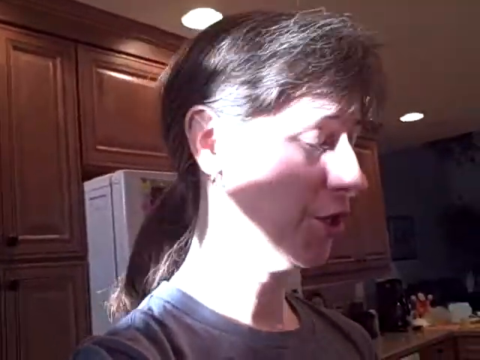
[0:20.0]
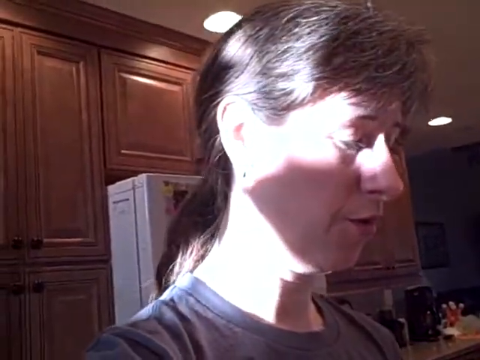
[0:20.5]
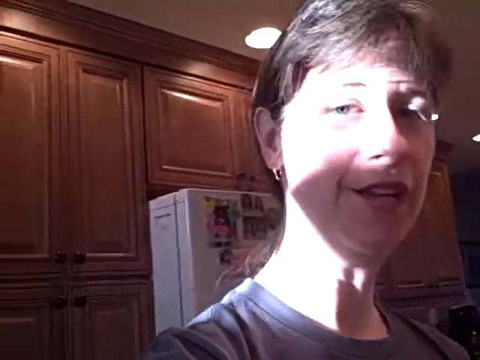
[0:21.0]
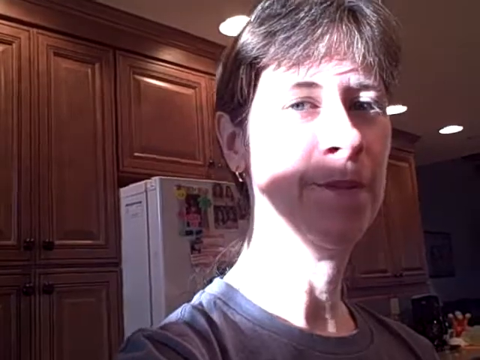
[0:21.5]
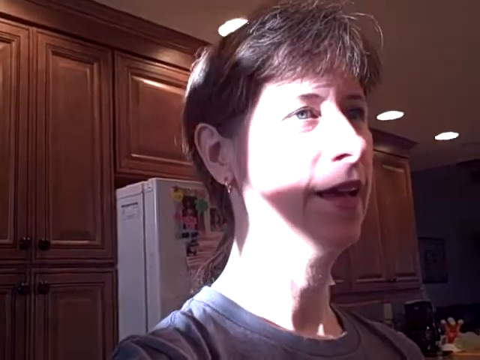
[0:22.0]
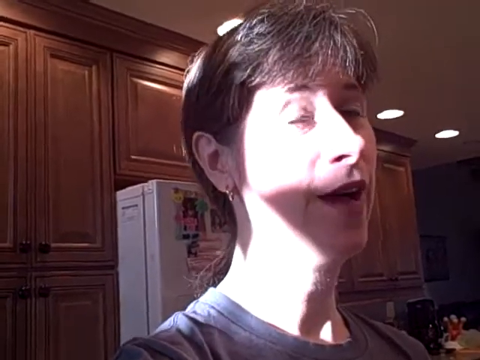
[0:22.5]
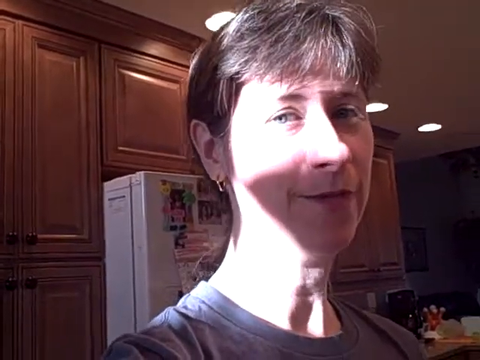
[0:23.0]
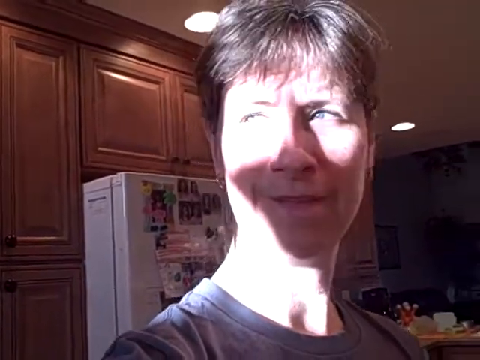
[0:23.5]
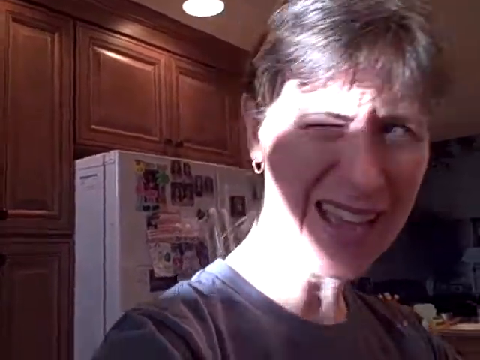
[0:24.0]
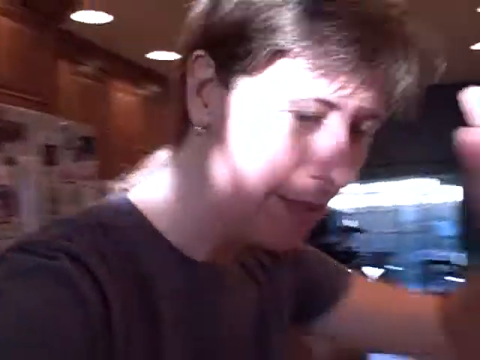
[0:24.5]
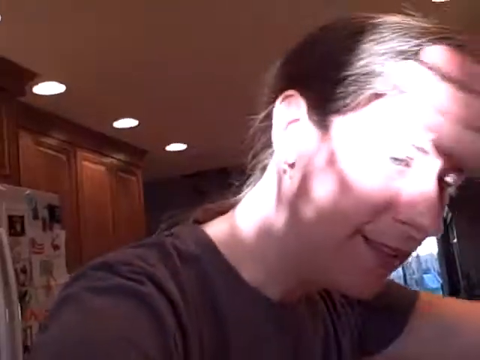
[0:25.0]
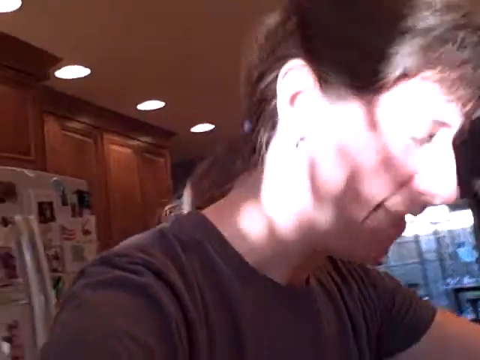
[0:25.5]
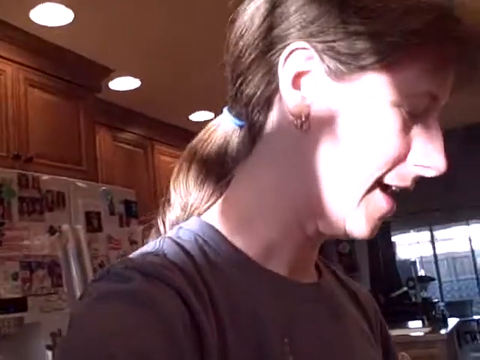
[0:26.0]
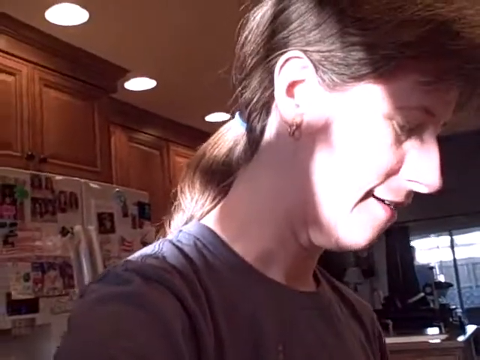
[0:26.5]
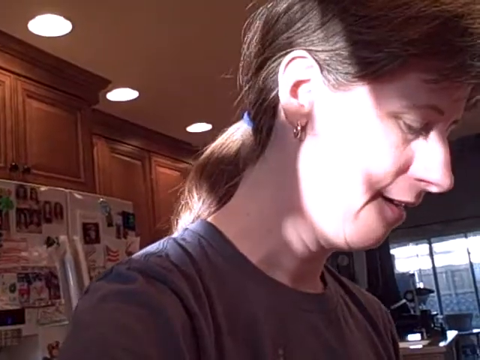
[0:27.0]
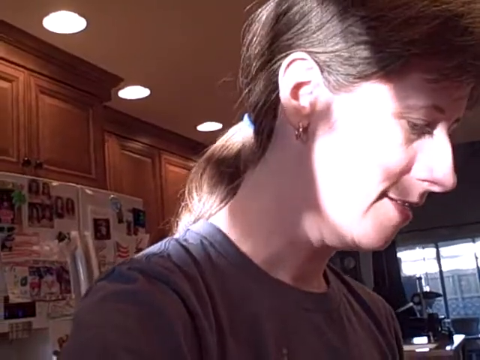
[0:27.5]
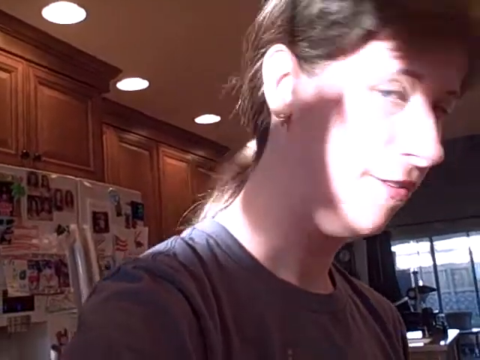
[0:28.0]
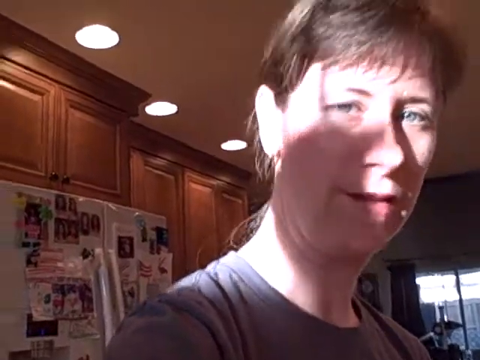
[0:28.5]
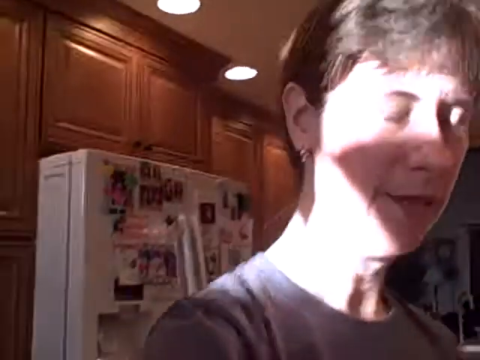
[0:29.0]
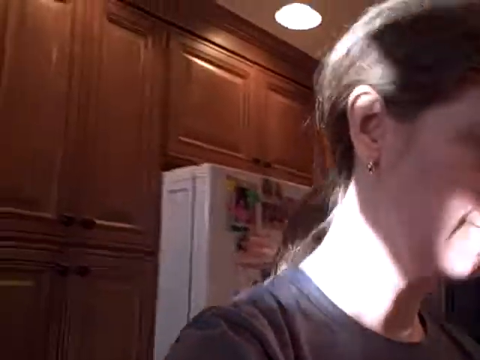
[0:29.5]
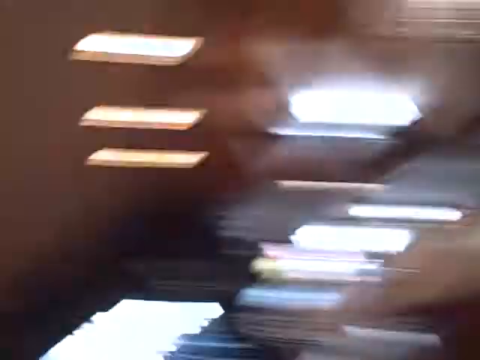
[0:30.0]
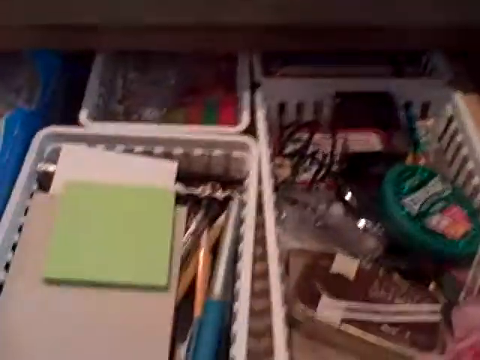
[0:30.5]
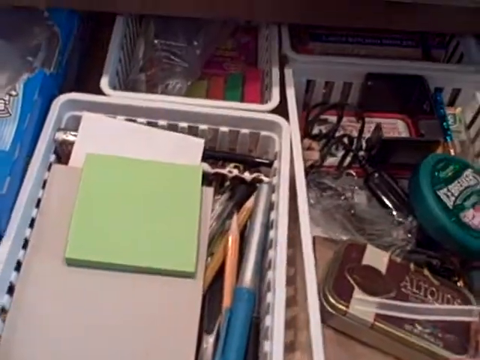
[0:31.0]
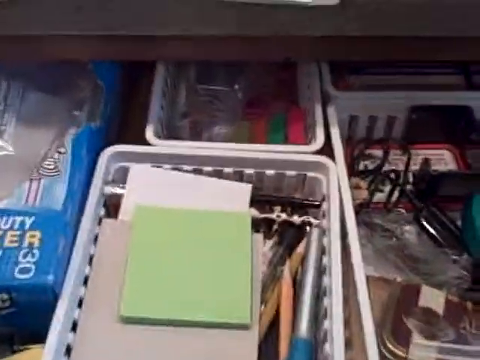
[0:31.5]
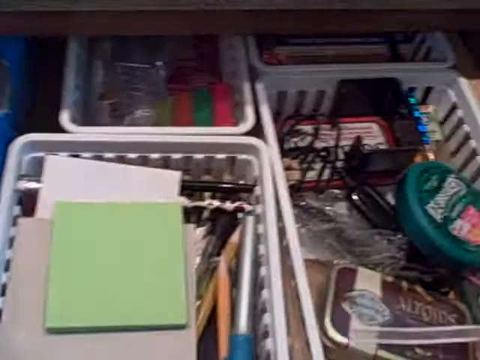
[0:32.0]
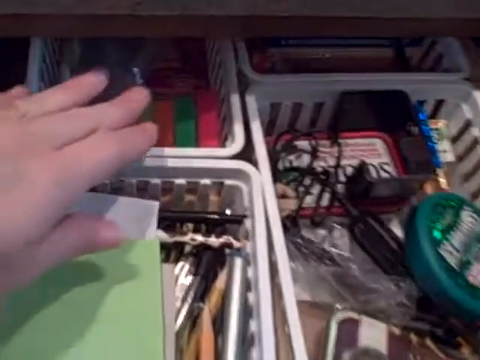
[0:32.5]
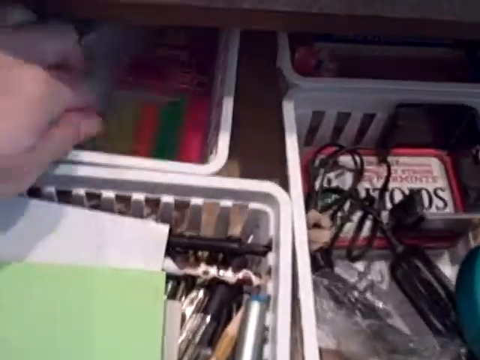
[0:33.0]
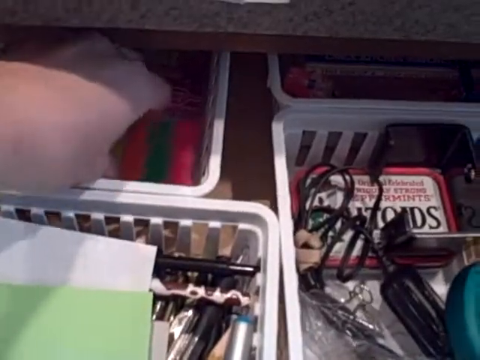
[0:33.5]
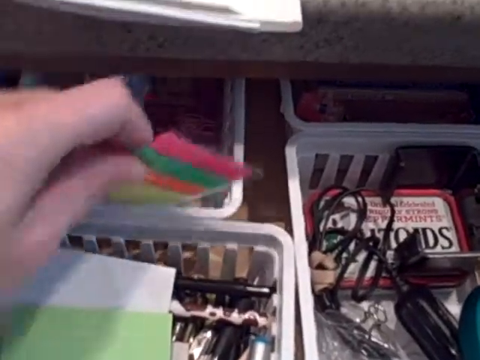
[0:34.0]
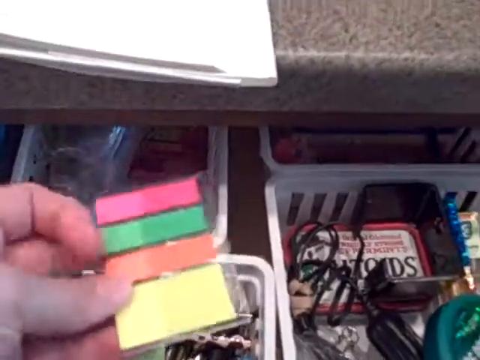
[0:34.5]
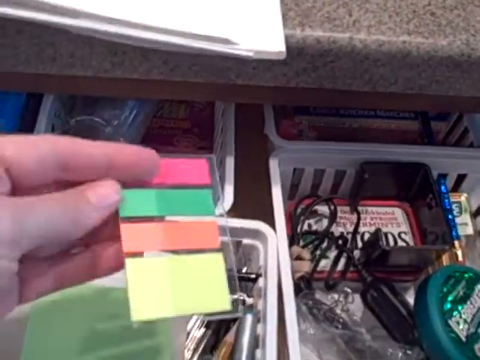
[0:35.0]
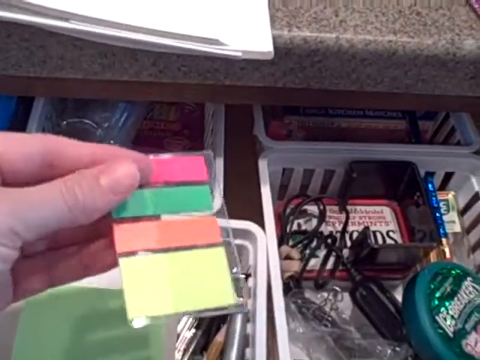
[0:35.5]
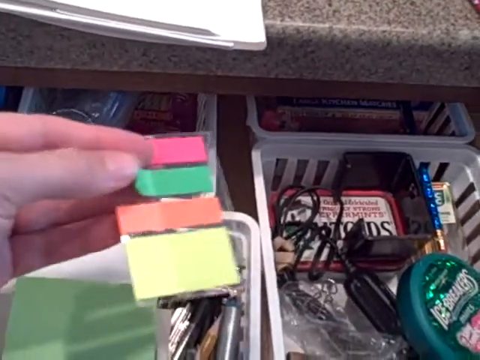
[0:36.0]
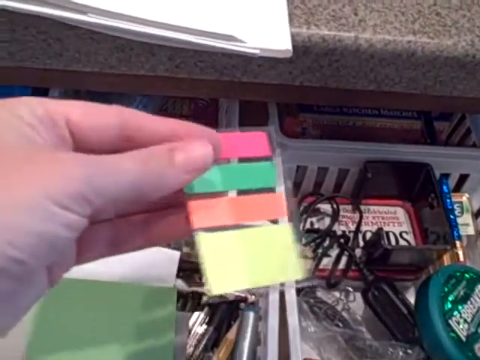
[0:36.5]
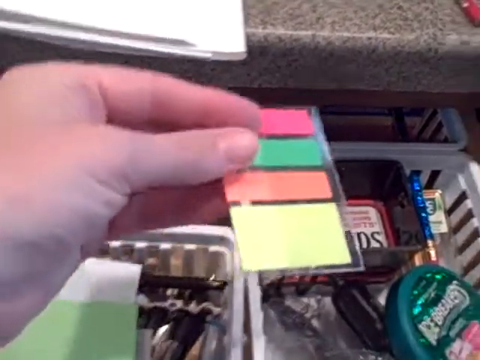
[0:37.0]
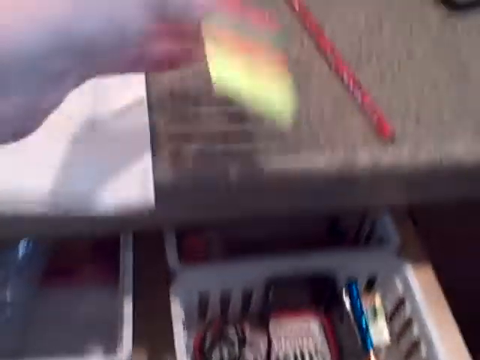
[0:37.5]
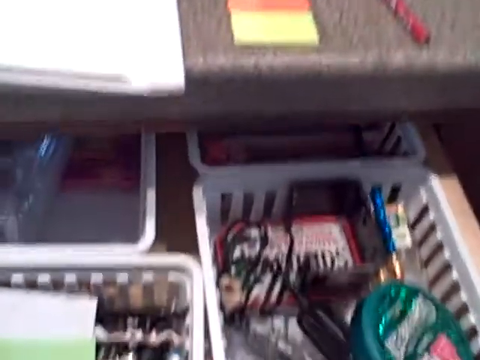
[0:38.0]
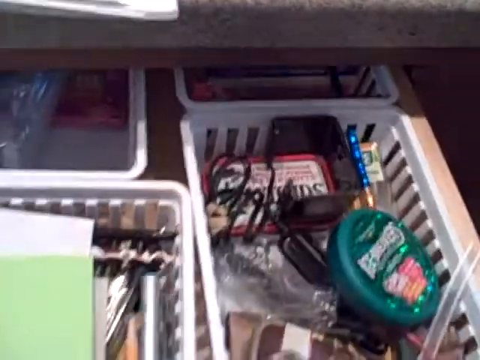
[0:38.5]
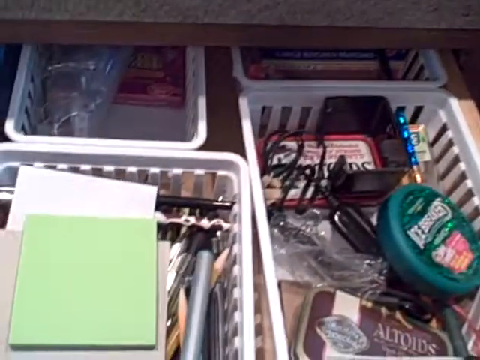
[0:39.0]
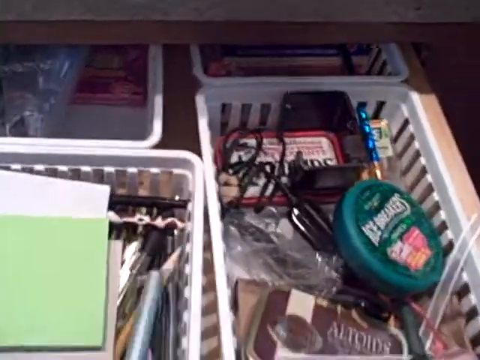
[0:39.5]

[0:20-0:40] The woman looks at the screen with sunlight still reflecting on her. She puts her hand up because the sun is getting in her eyes, back in the centre of the screen where she started. She flips the camera to a drawer she has opened that looks like a junk drawer, and pulls out some stationery and what look like neon coloured labels for marking pages, in pink, green, yellow and orange. Inside the drawer are baskets holding items, some of which look stationery related: post-it notes, tins of sweets, pens and a box of Tic Tacs. It appears to be daytime. On top is a granite surface that appears to have a pencil and some paper on it. The camera flips back to the woman, who still has the sunlight glaring in her face.